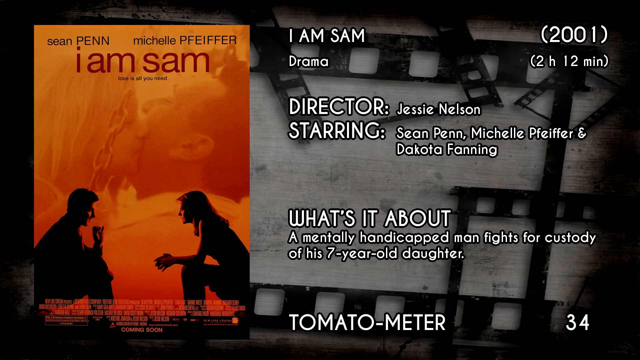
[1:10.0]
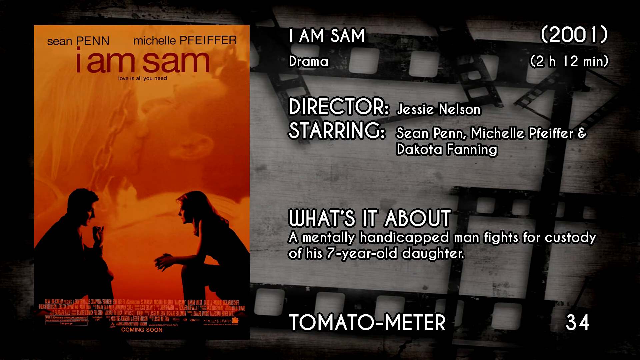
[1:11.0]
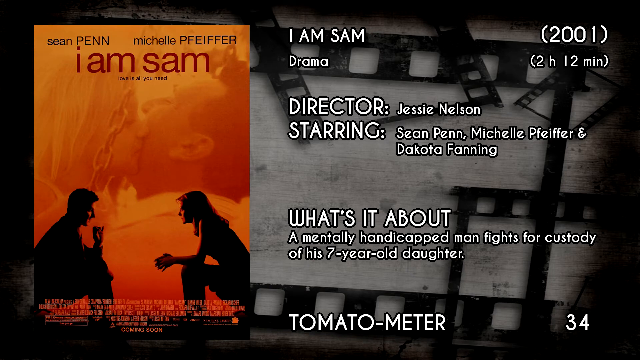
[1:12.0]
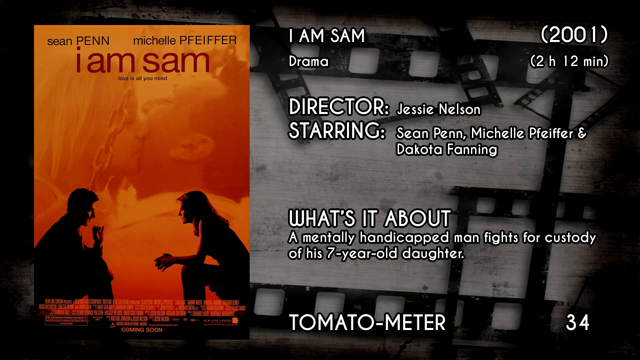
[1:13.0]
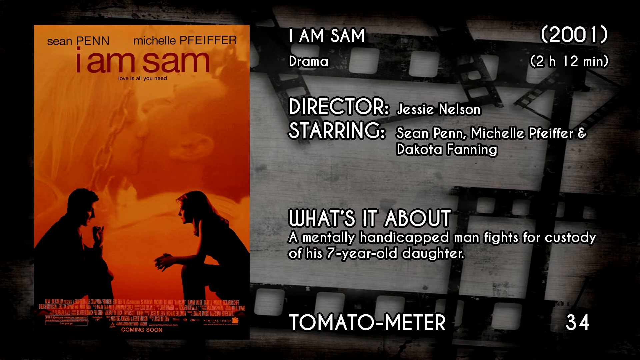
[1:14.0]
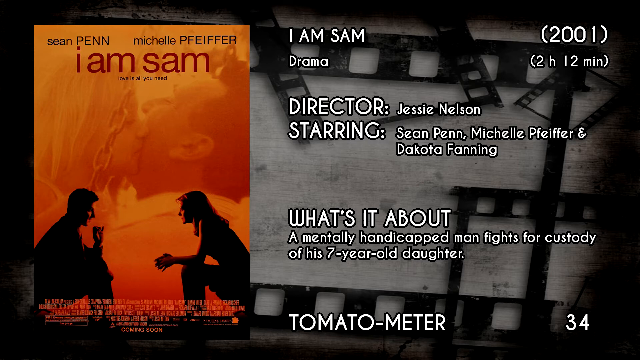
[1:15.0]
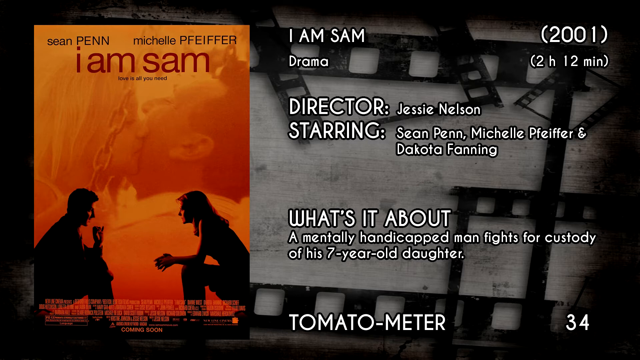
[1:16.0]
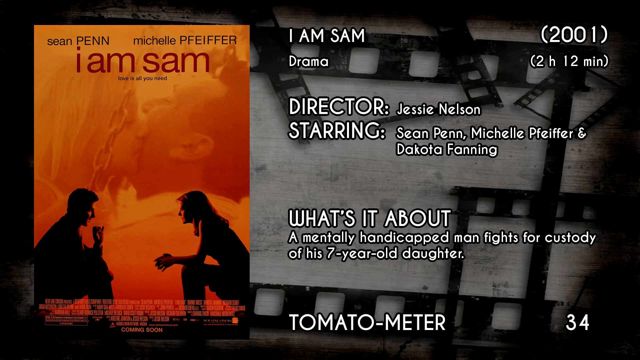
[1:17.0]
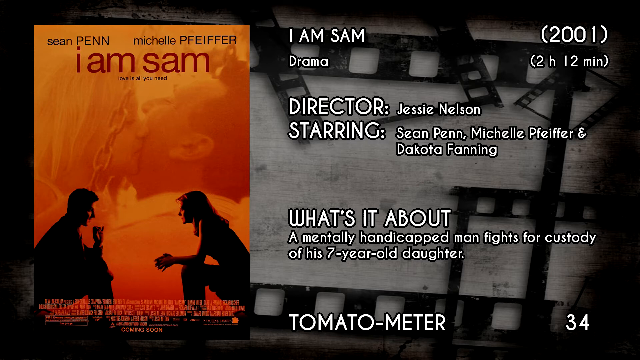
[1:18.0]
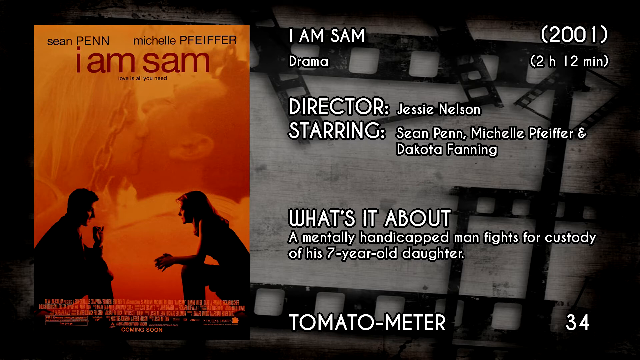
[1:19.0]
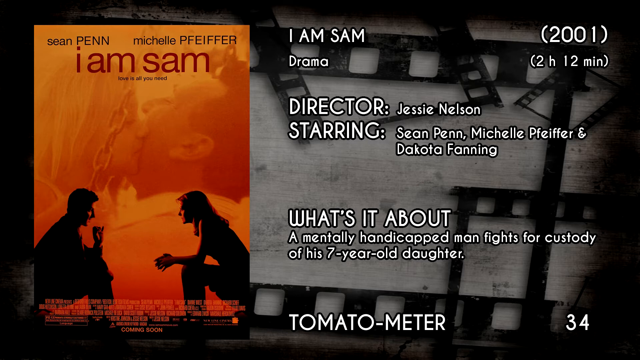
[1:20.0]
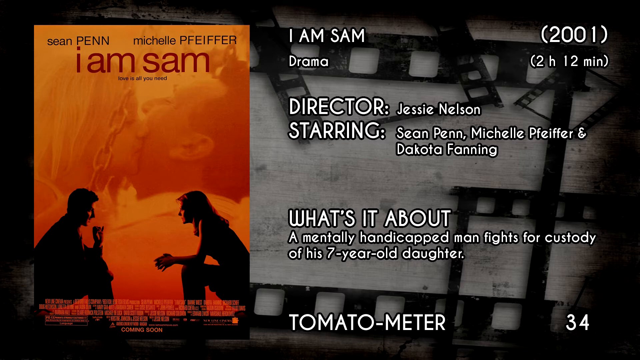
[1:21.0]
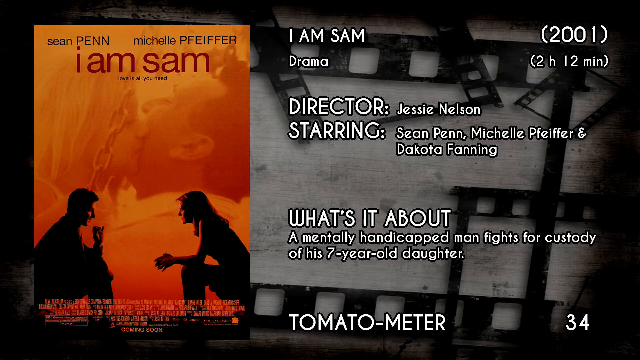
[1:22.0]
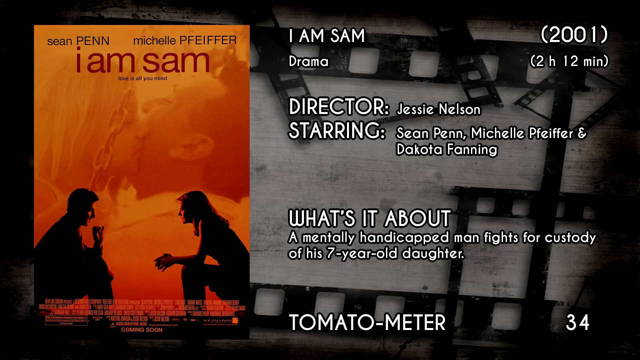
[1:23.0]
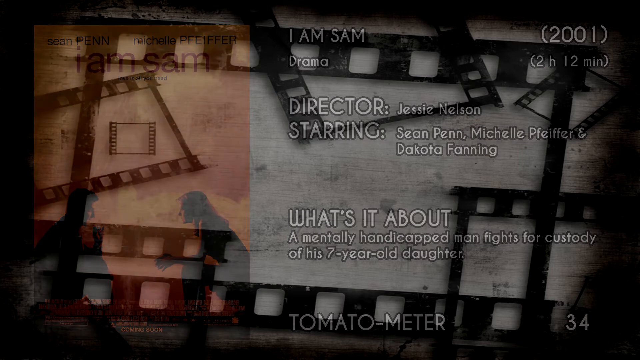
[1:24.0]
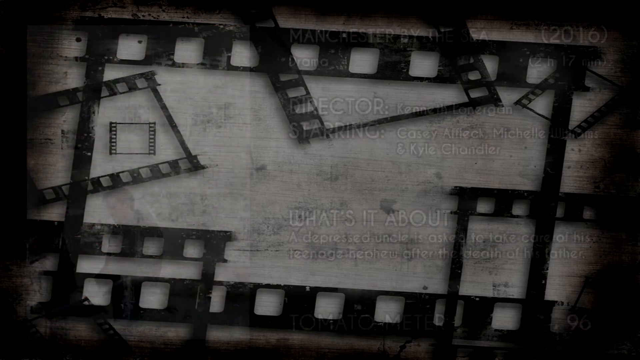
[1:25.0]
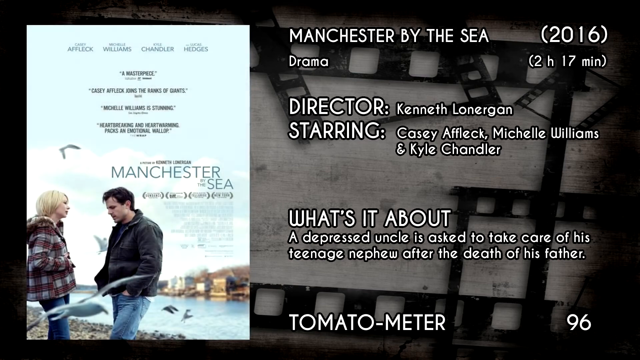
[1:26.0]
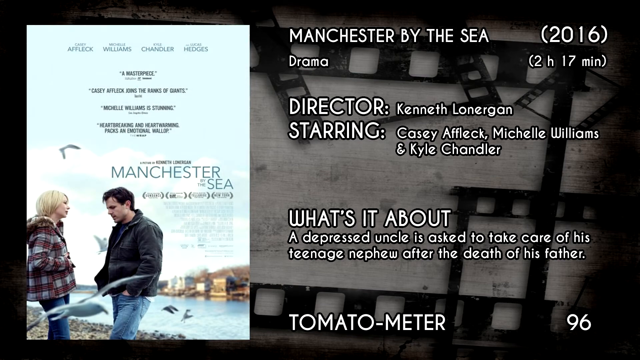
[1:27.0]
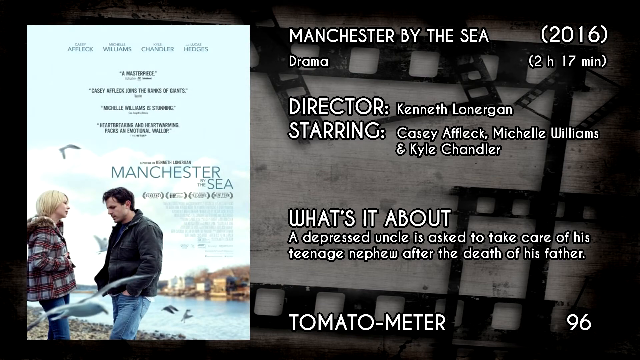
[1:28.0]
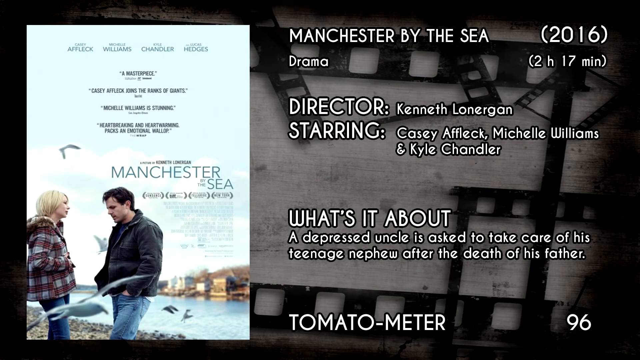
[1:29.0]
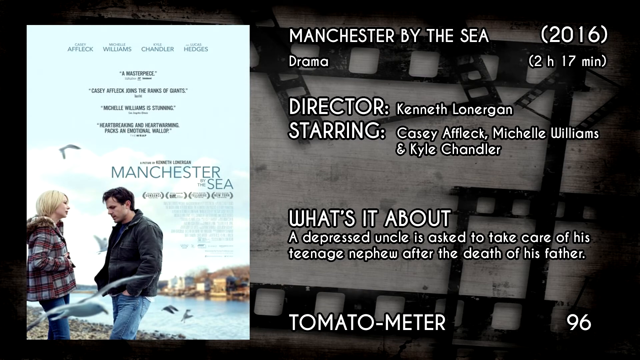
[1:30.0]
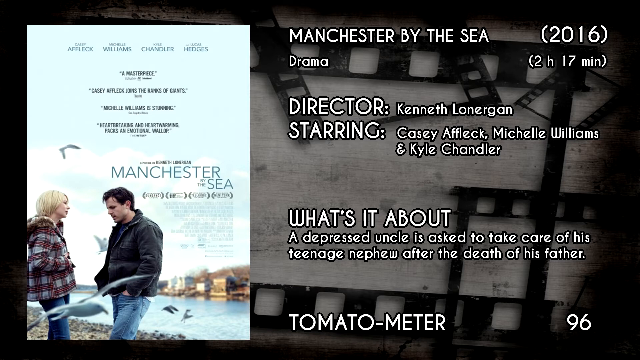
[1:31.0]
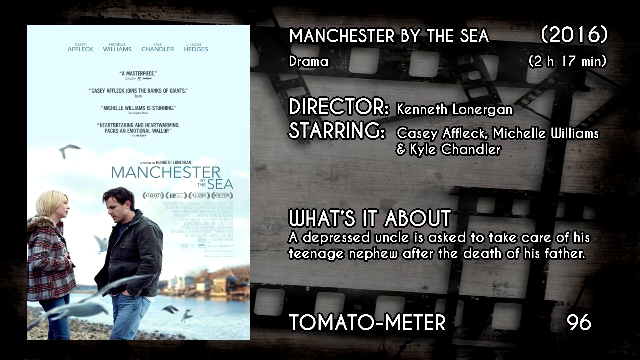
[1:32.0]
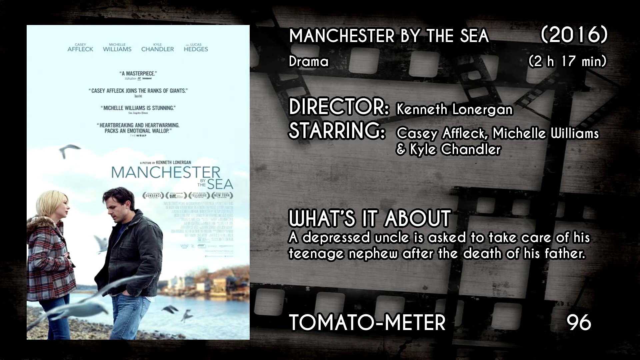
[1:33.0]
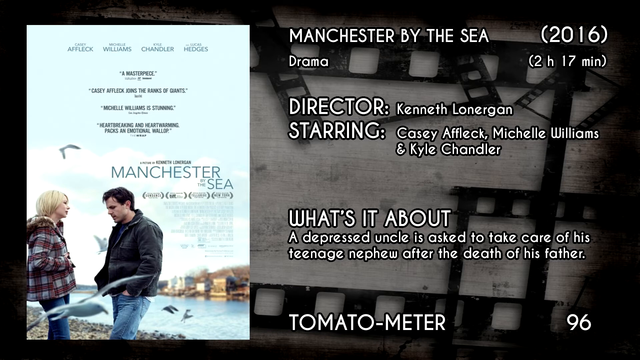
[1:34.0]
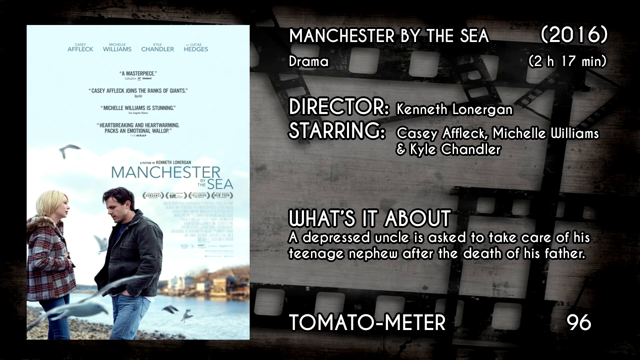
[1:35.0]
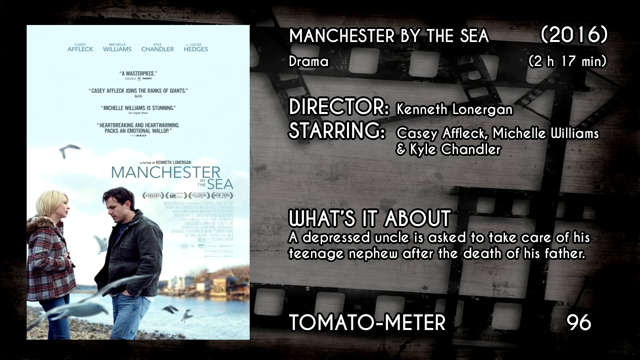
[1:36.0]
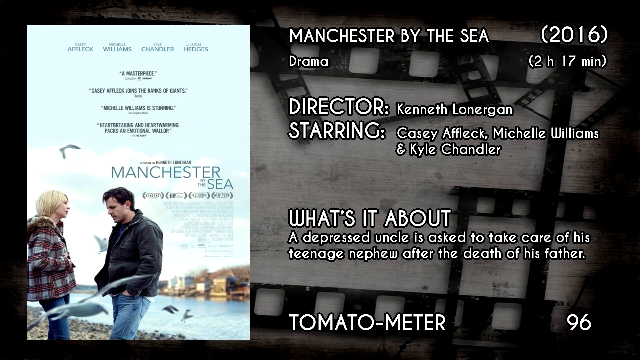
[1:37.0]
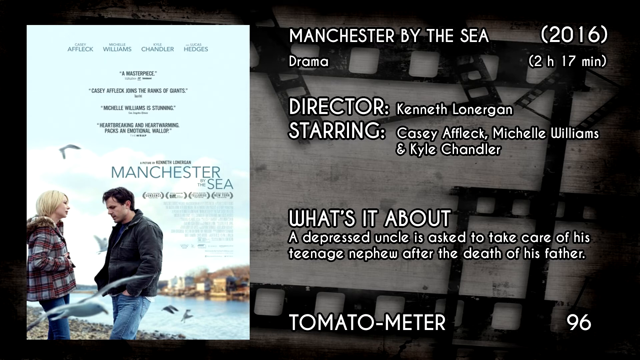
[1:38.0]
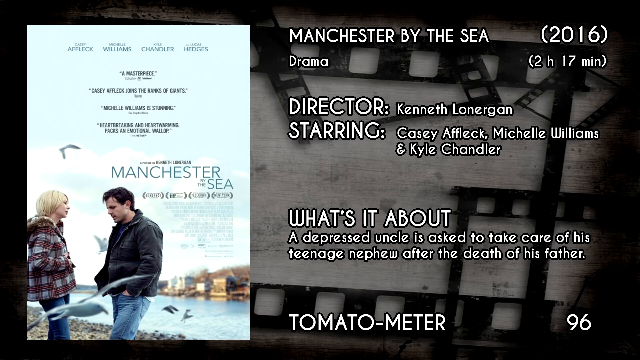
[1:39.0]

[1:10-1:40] The next movie is I Am Sam, described as being about a mentally handicapped man who fights for custody of his seven-year-old daughter. The cover shows the daughter kissing the father on the cheek. The movie is directed by Jesse Nelson, released in 2001, categorized as a drama, and 2 hours 12 minutes long, starring Sean Penn, Michelle Pfeiffer and Dakota Fanning. Tomatometer also appears. The background behind Sam is a flaming red, and the background of the description is gray, with "I Am Sam" written on it. A person wearing spectacles appears to be presenting a variety of movies, apparently giving options and categories of different movies.